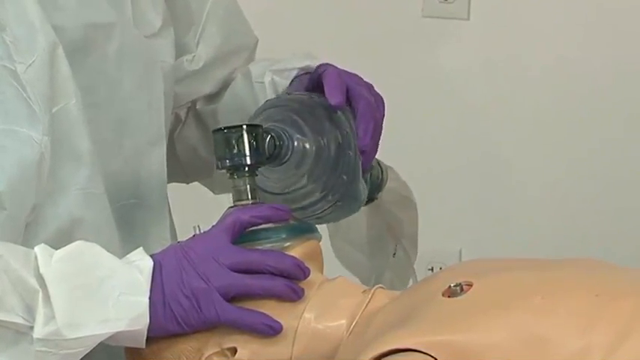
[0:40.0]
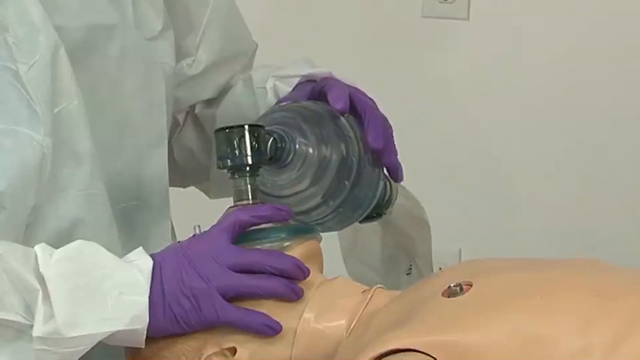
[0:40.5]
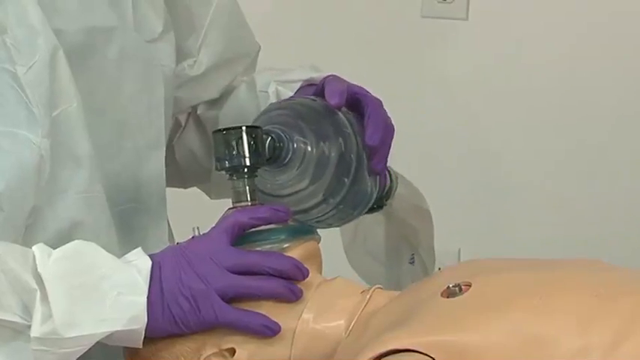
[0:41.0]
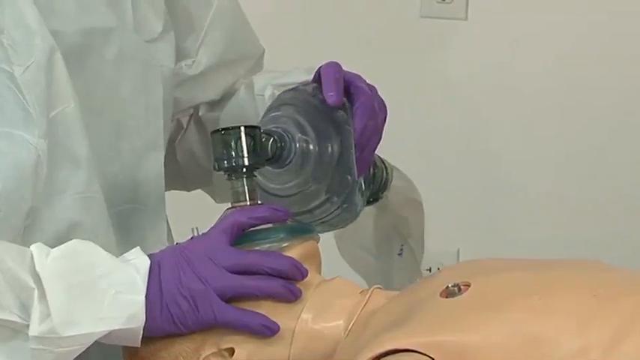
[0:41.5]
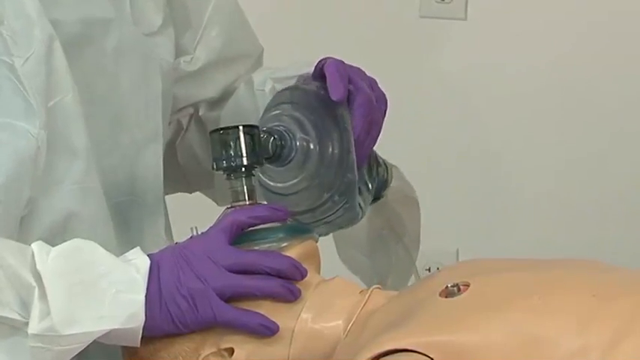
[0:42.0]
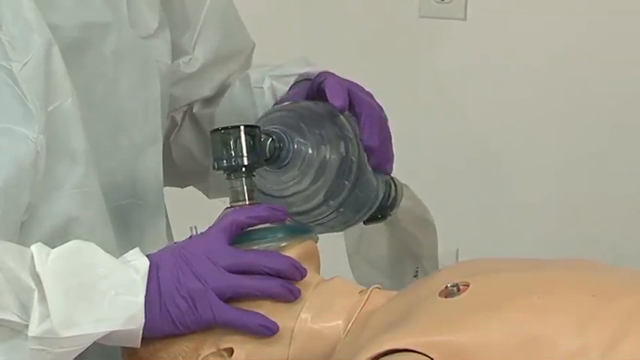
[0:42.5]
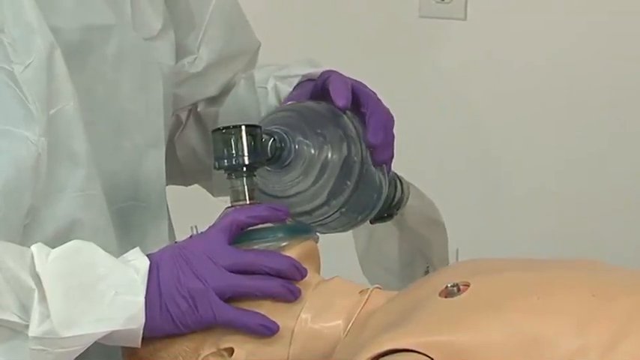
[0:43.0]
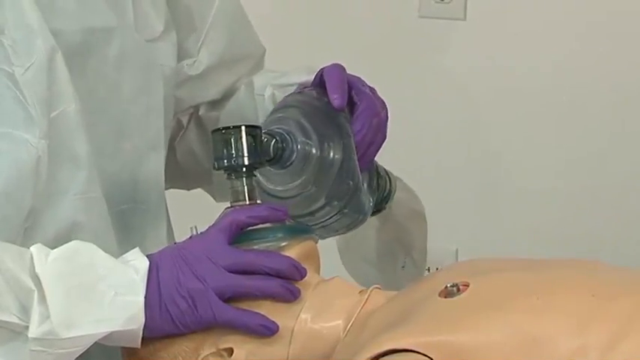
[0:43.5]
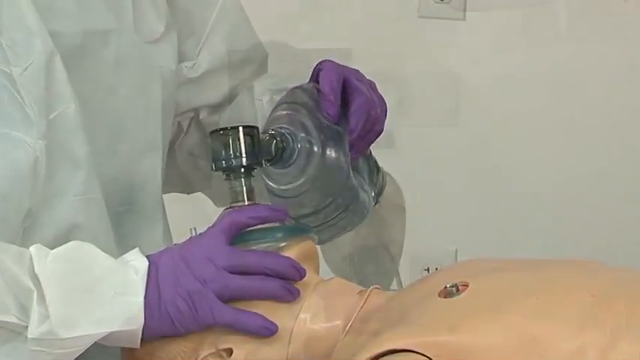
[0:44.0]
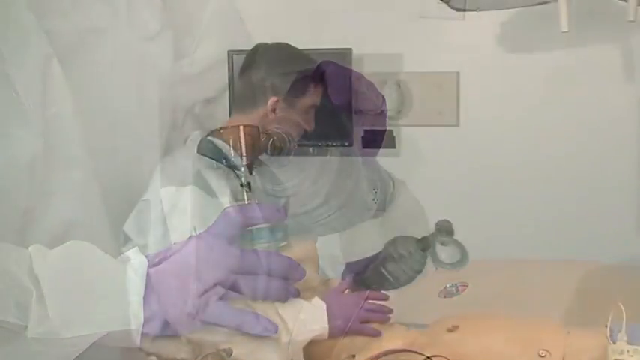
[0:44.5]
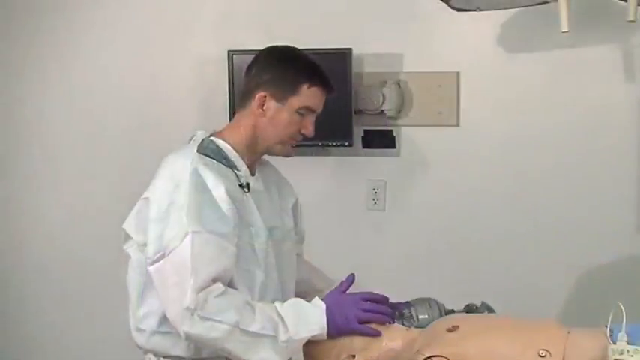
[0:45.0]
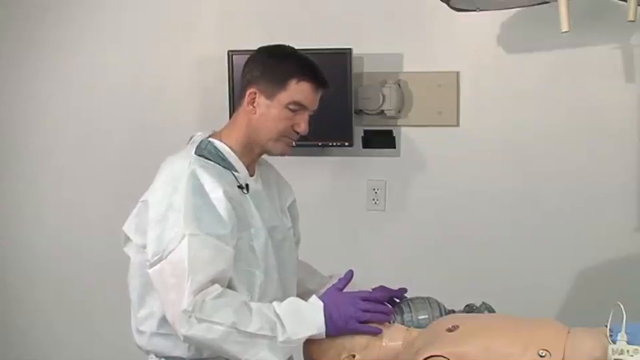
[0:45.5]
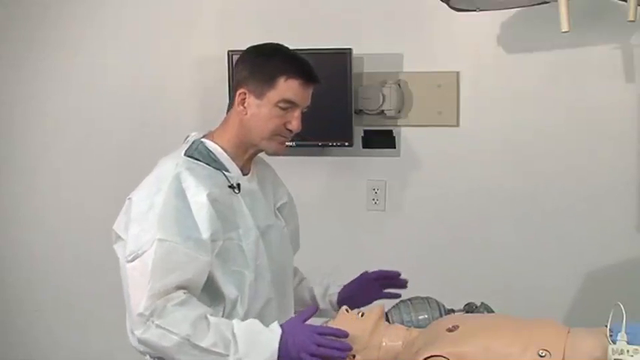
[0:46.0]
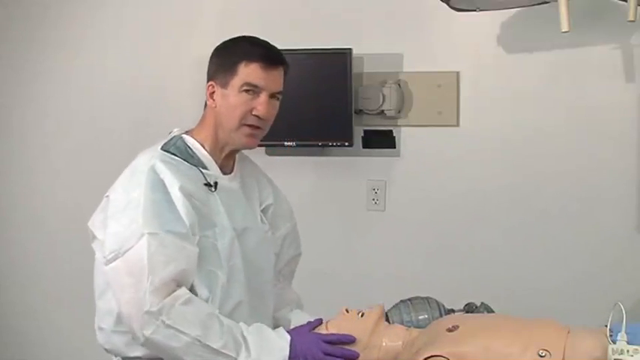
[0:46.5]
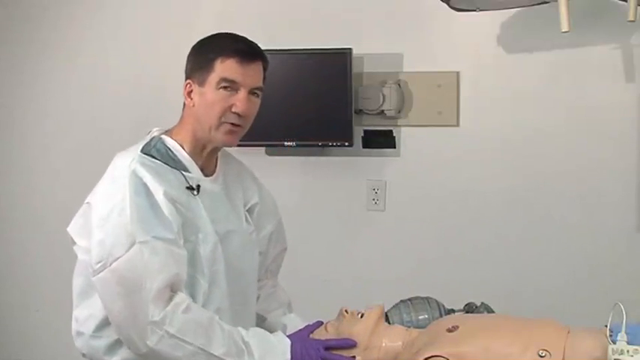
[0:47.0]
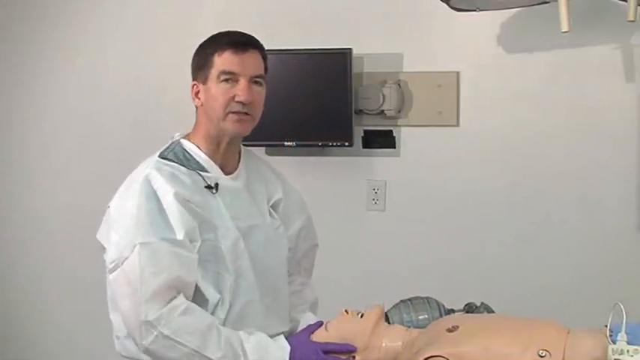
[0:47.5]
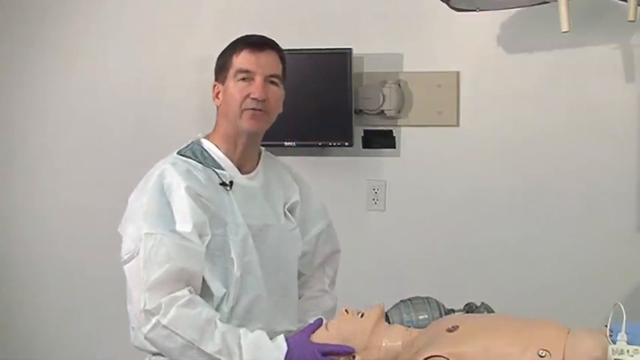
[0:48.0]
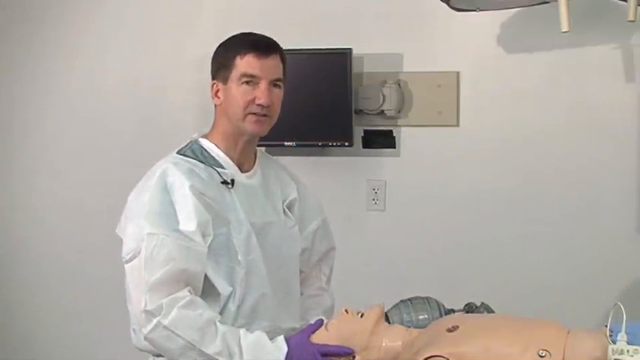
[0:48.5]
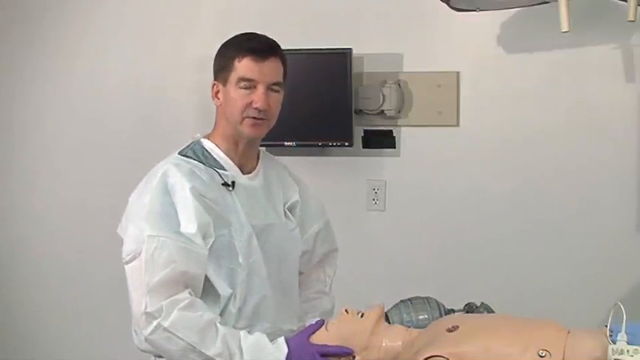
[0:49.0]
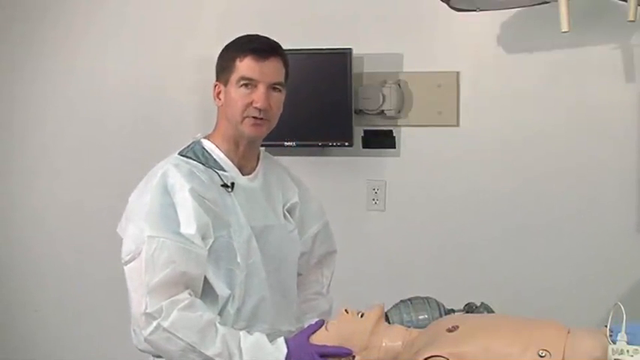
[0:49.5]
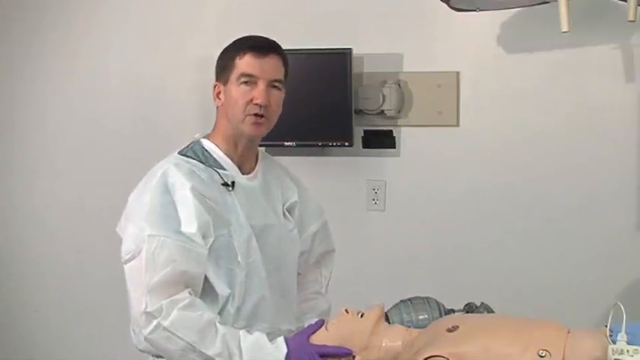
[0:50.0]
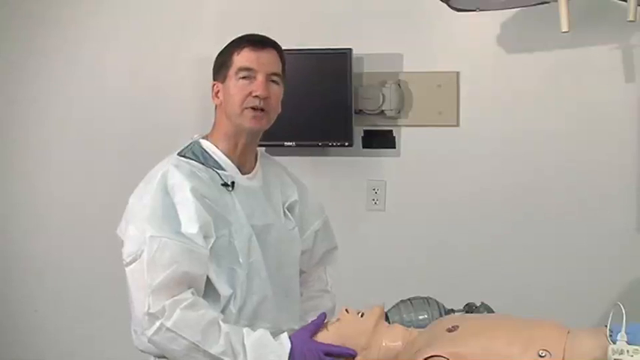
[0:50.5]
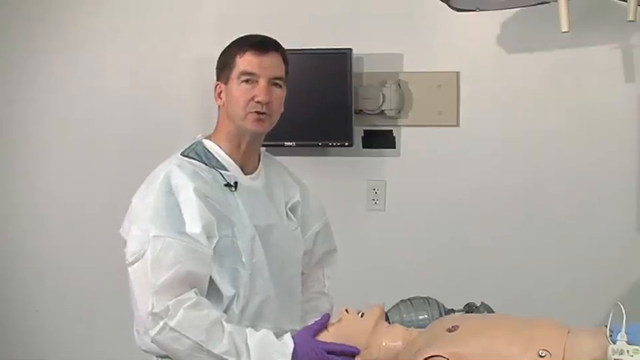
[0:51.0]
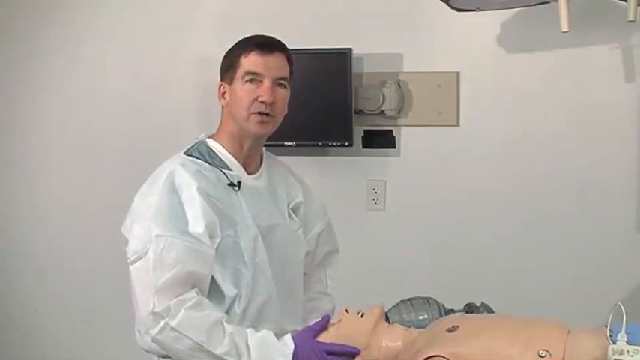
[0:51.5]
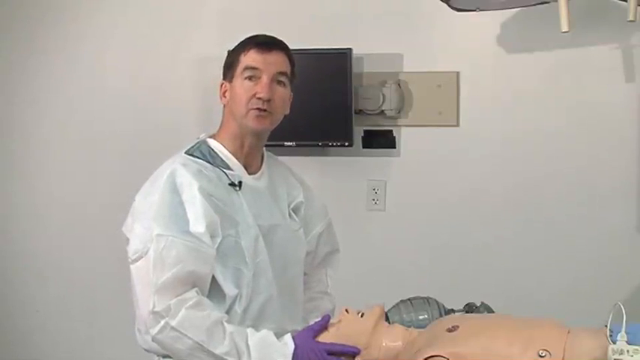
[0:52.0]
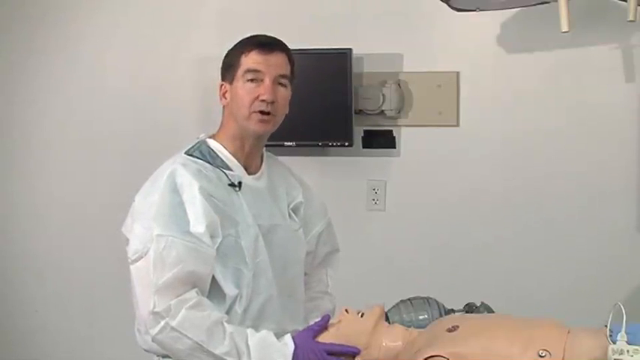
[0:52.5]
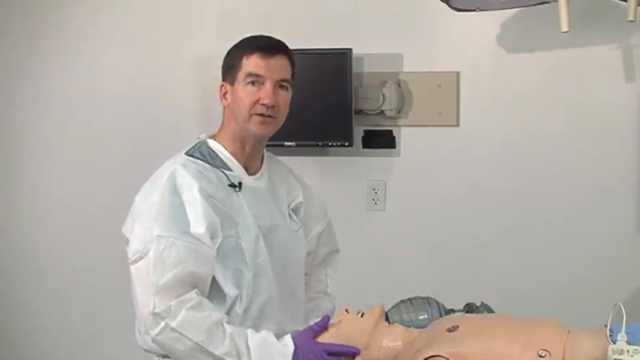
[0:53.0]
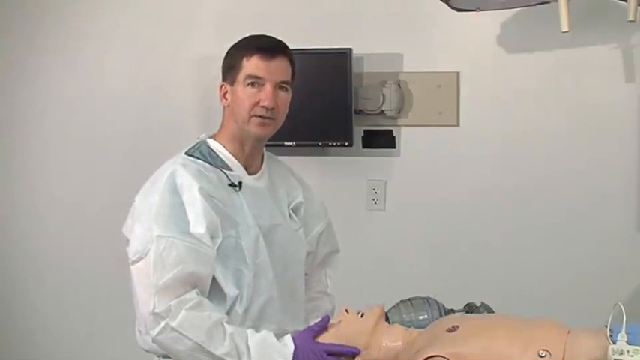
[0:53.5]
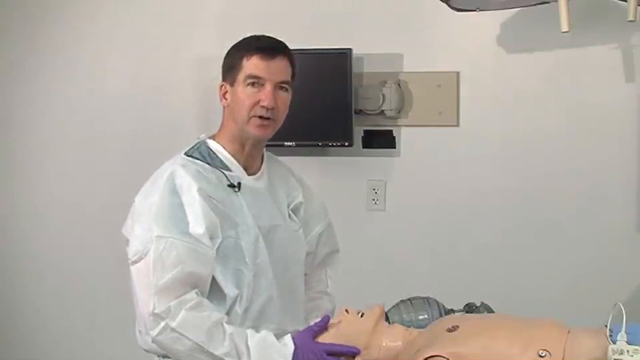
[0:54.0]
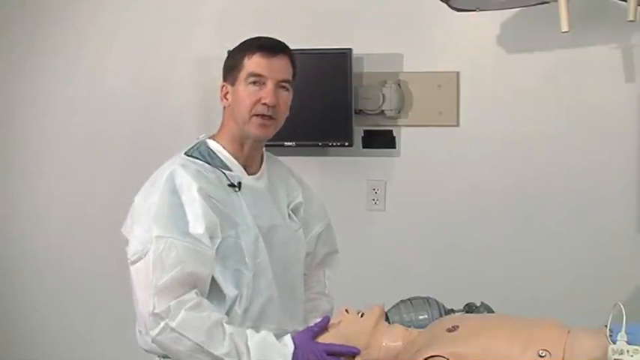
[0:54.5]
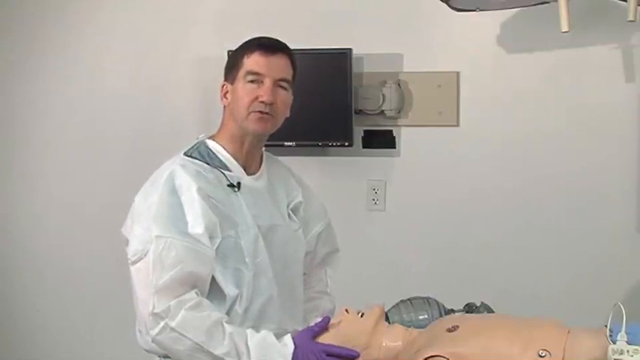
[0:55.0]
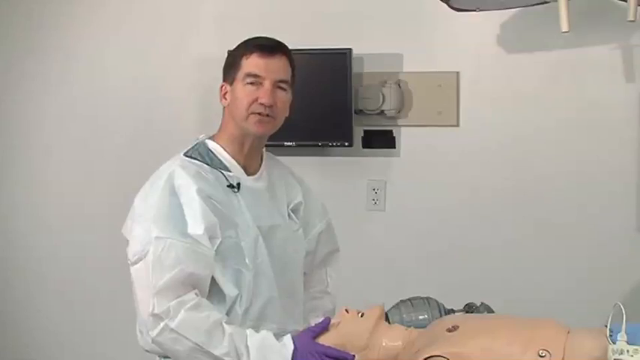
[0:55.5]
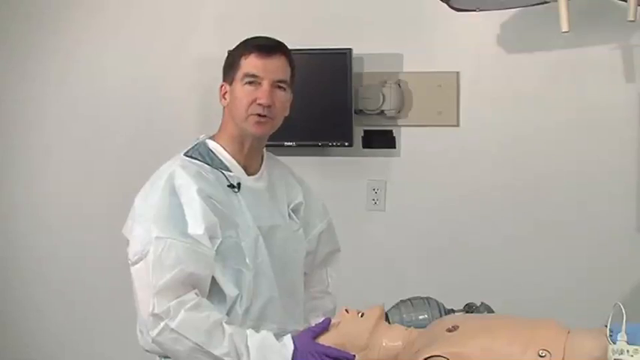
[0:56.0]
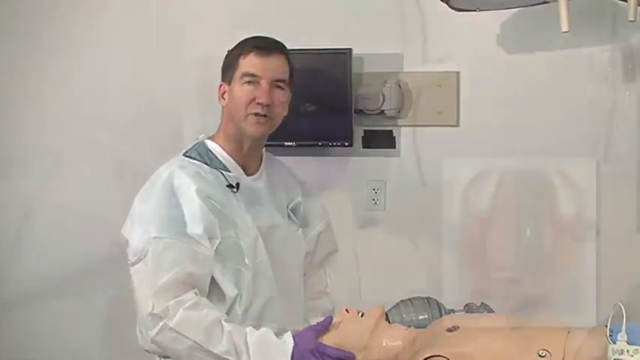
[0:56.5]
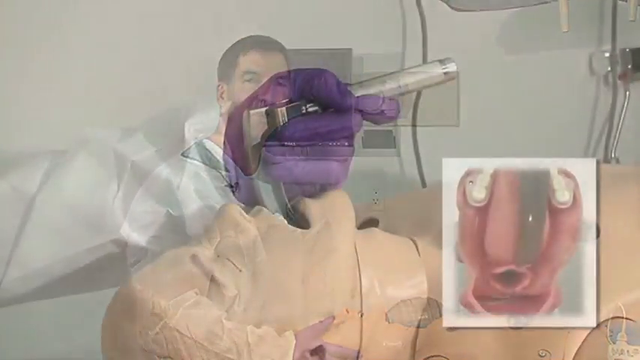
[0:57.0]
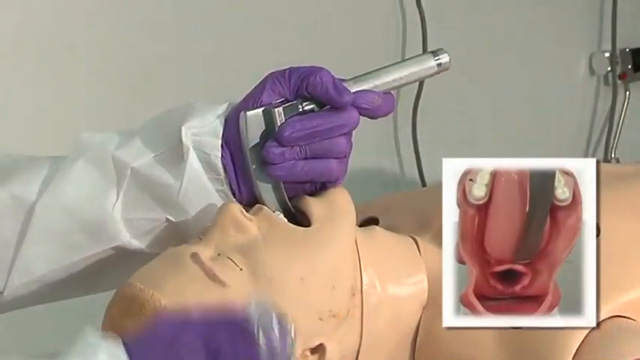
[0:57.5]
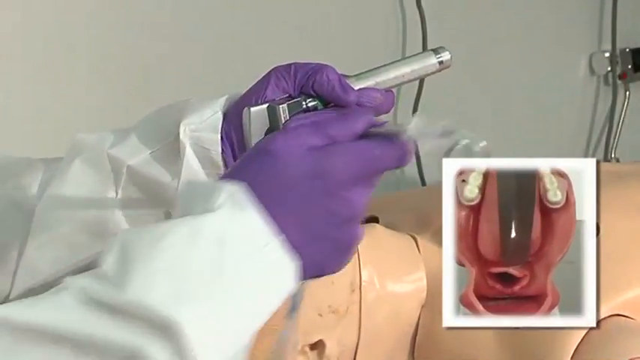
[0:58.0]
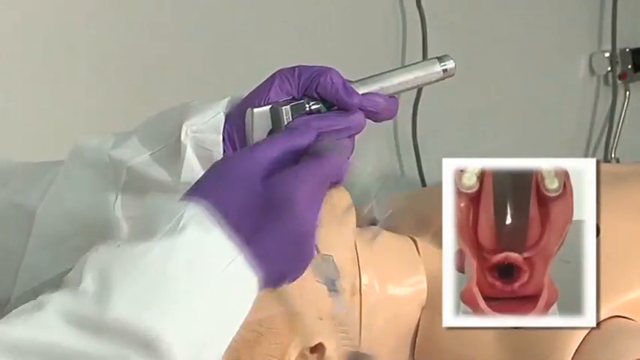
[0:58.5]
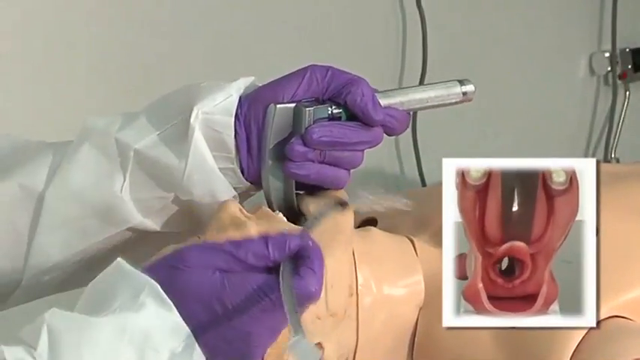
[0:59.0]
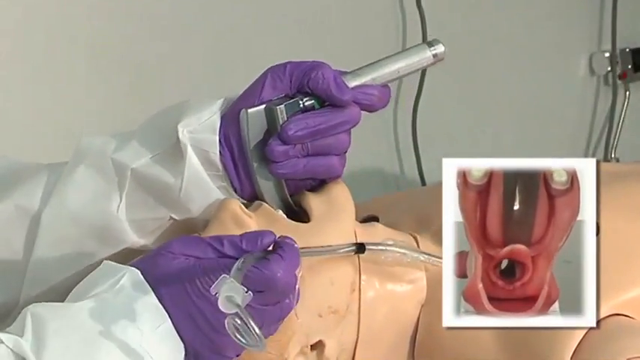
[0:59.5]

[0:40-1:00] A doctor wearing a white gown and purple gloves holds a pump over the face of a mannequin lying flat. He pushes and squeezes the pump, which kind of has a jelly texture. The video transitions to him putting the pump down, then he puts his hands on the mannequin's head and looks at the camera while talking, still firmly grasping the mannequin's head. Another scene shows the doctor's hand with some kind of medical tool in the mannequin's mouth, and a small video inset on the right side kind of shows the inside of what he is doing; it looks like there is a camera on the tool.